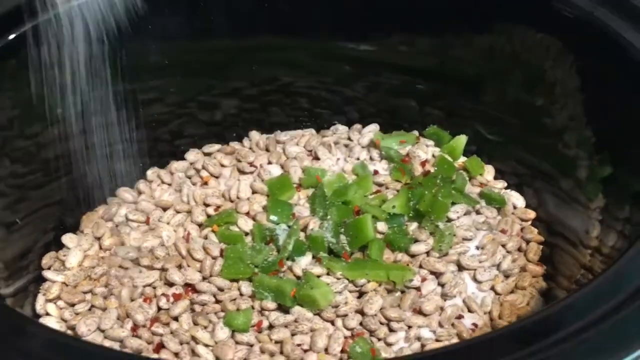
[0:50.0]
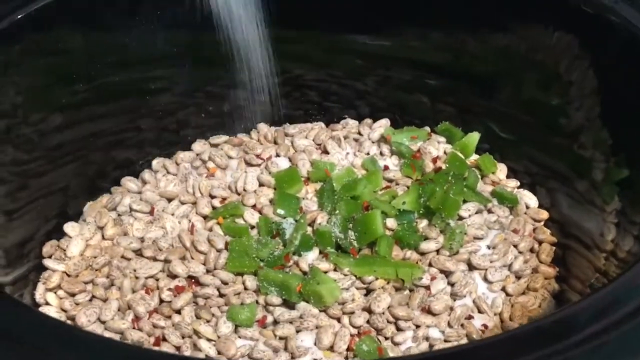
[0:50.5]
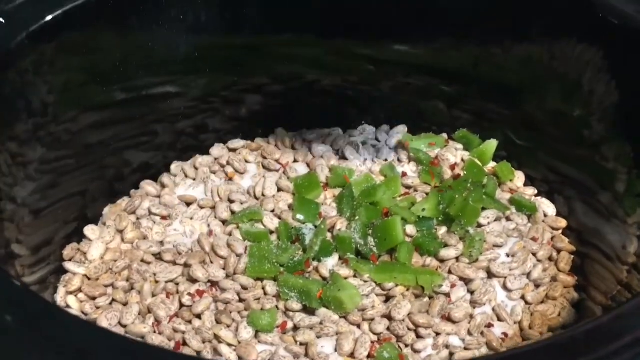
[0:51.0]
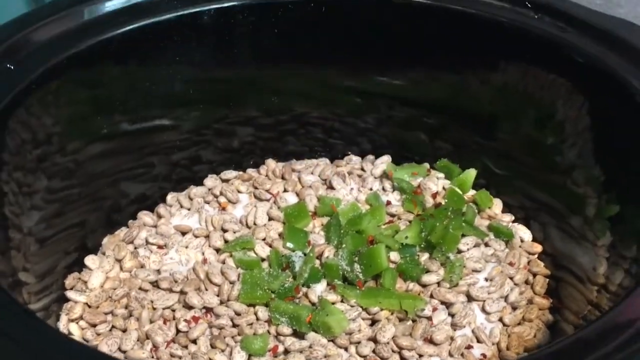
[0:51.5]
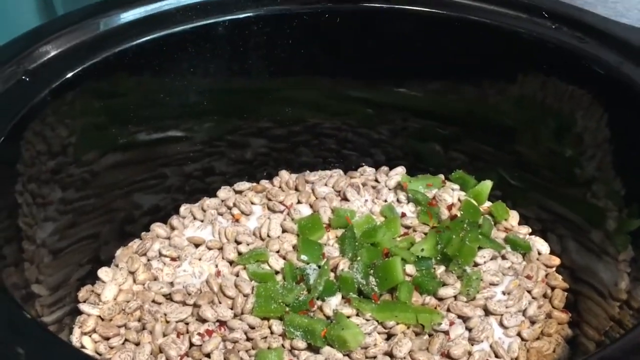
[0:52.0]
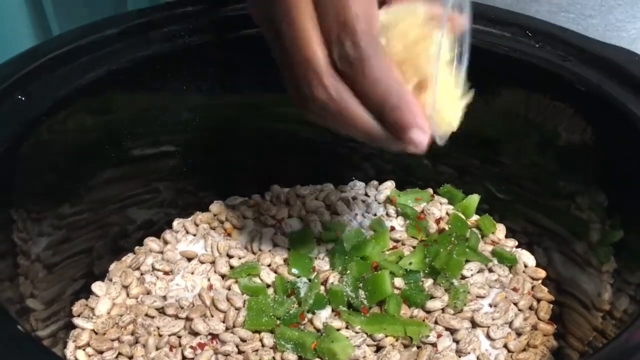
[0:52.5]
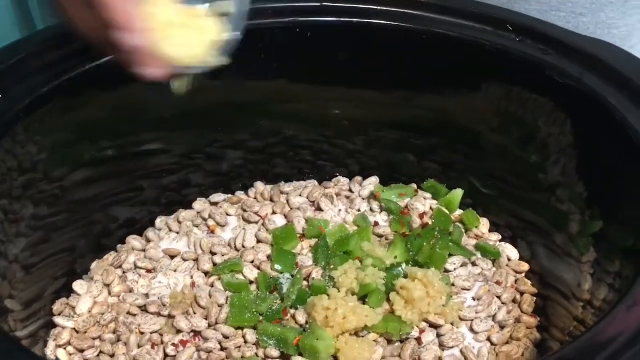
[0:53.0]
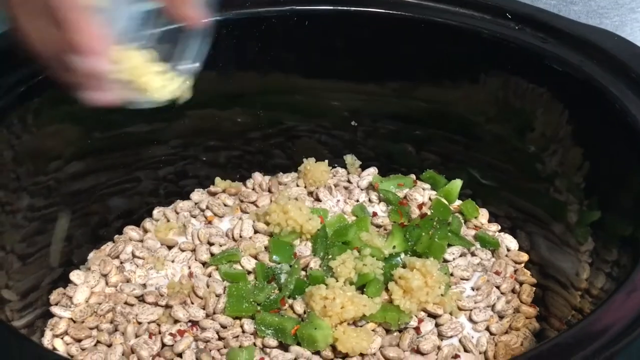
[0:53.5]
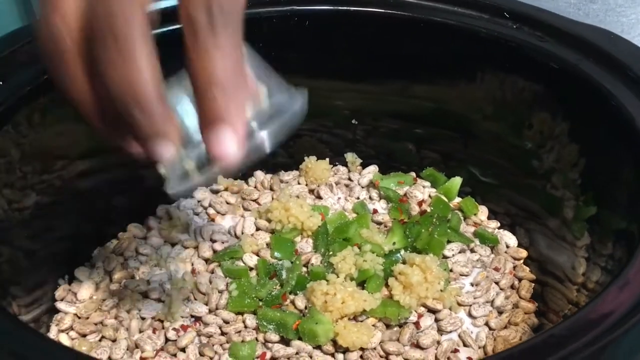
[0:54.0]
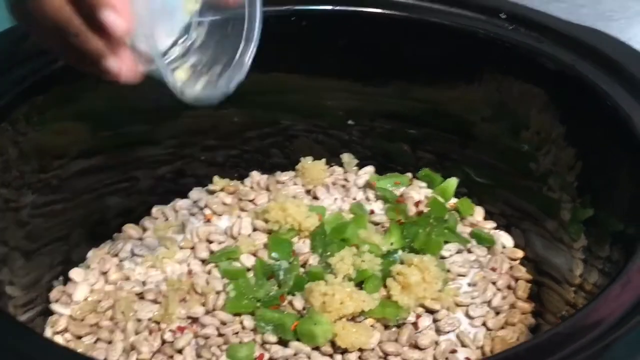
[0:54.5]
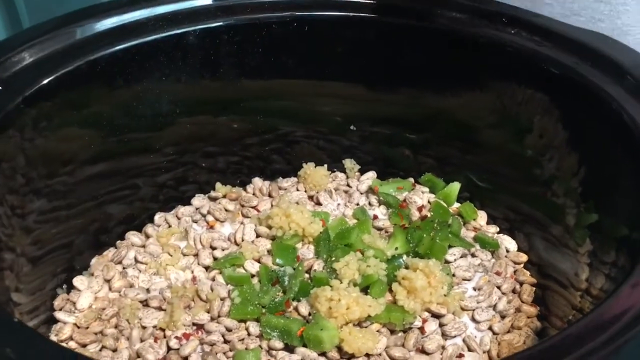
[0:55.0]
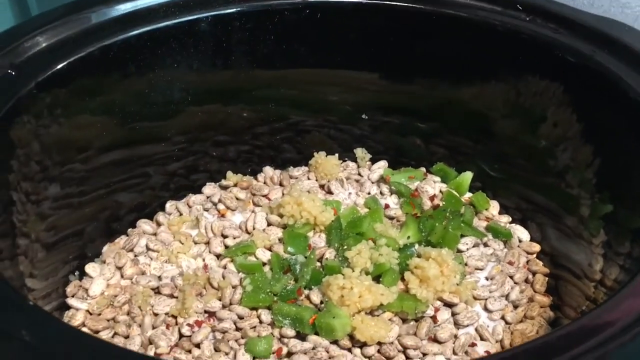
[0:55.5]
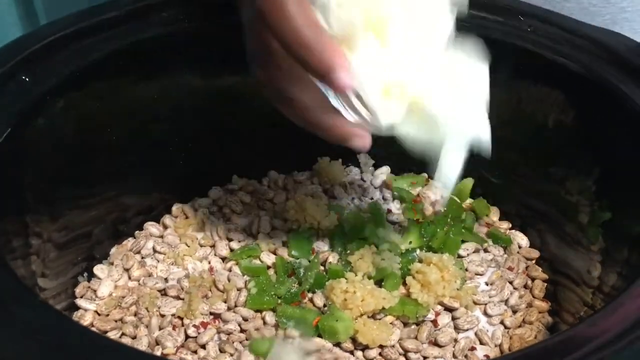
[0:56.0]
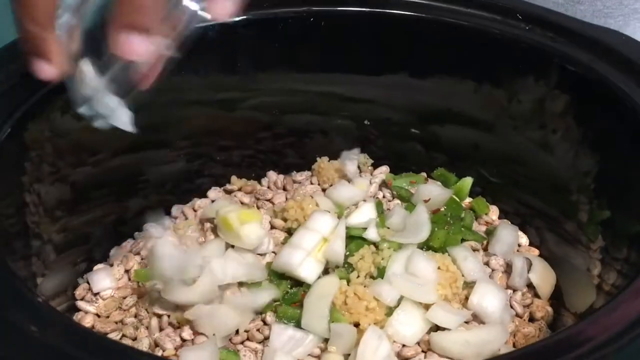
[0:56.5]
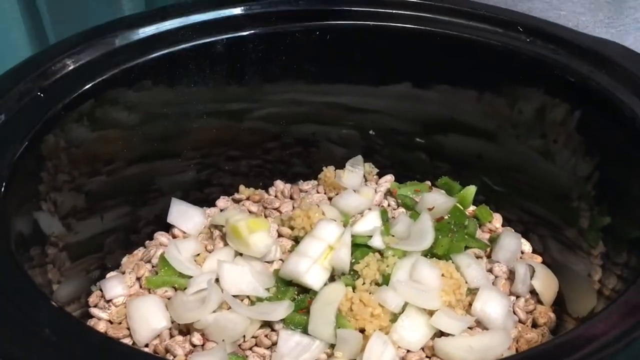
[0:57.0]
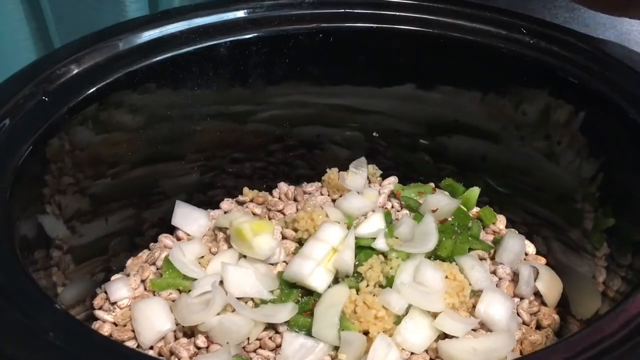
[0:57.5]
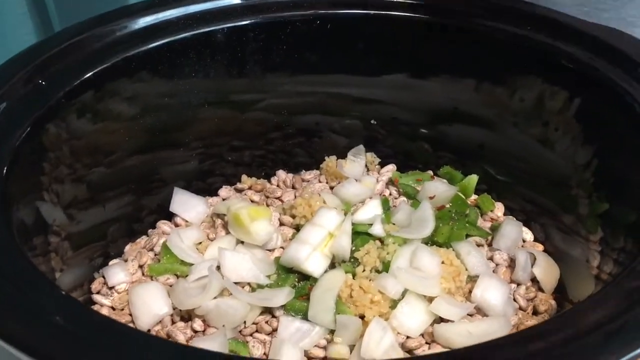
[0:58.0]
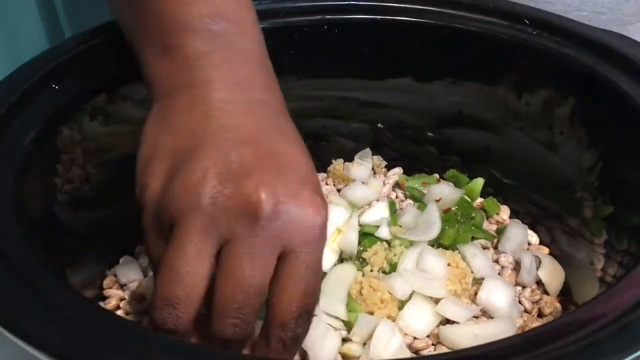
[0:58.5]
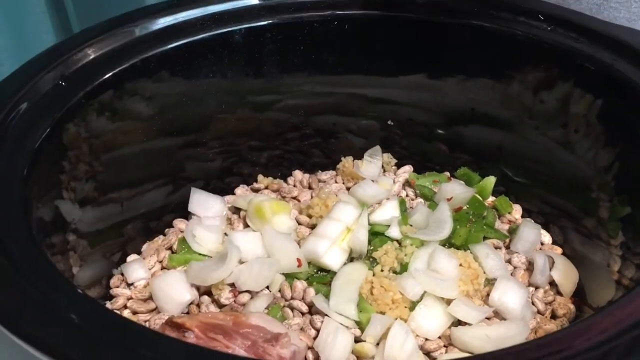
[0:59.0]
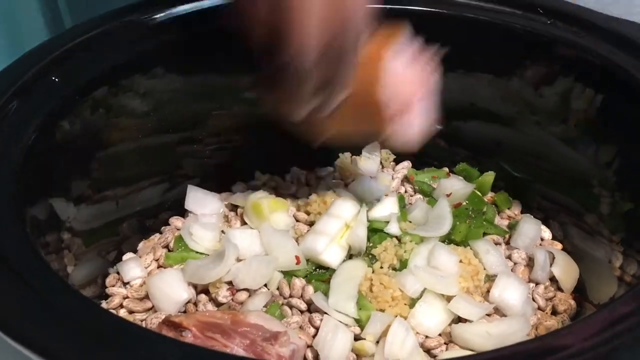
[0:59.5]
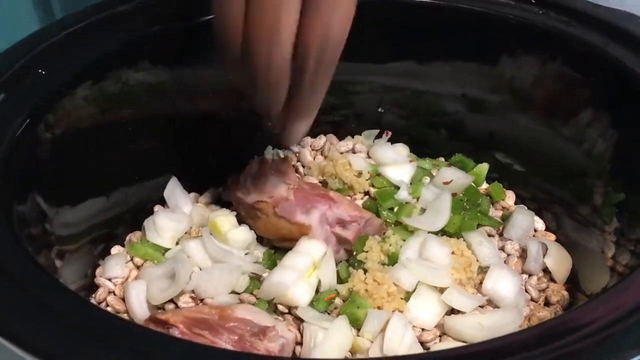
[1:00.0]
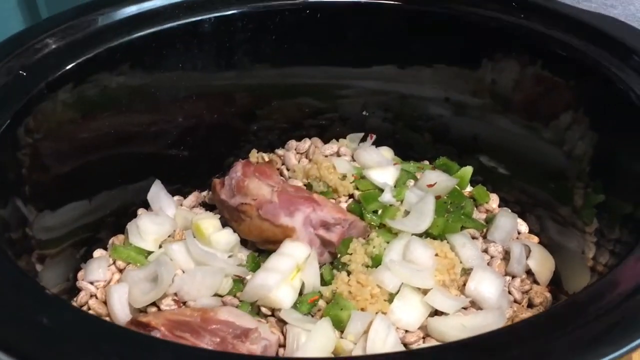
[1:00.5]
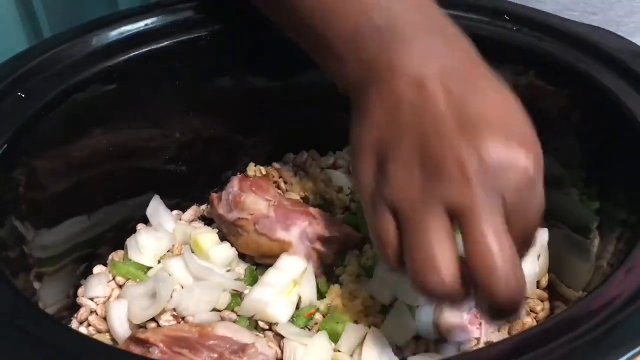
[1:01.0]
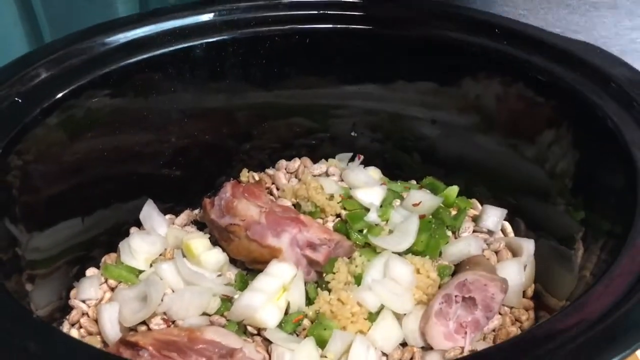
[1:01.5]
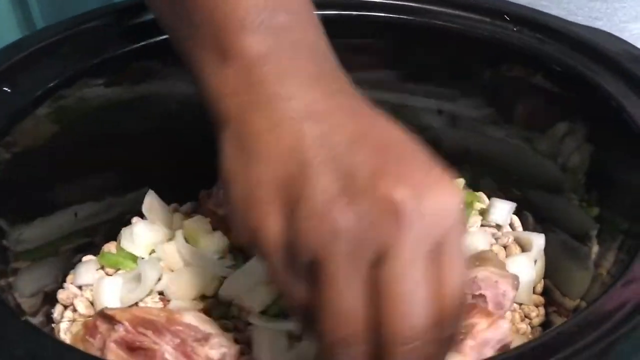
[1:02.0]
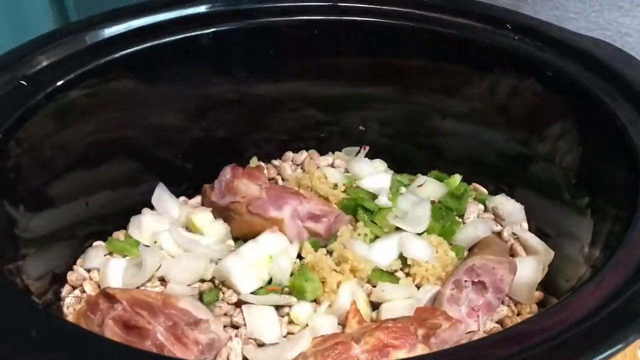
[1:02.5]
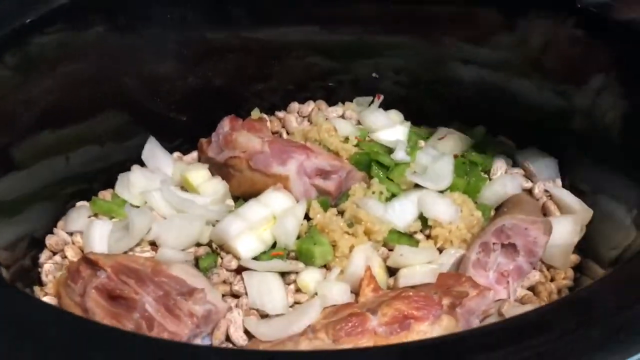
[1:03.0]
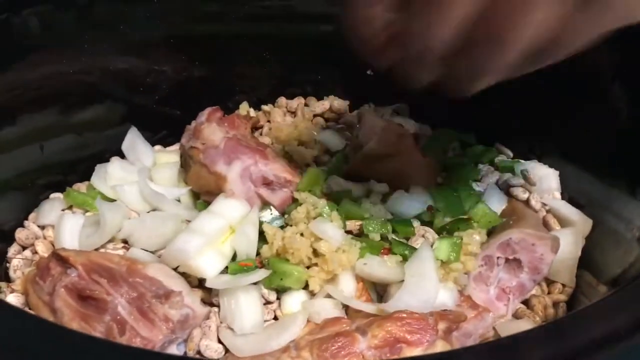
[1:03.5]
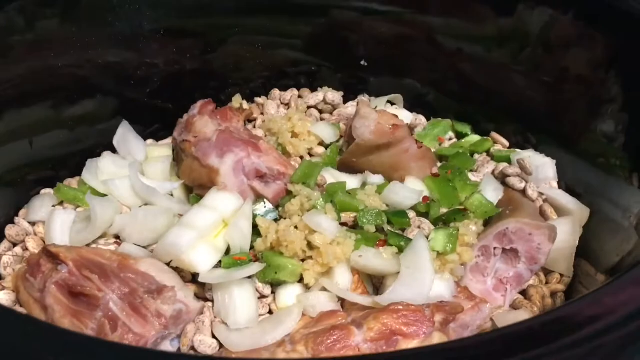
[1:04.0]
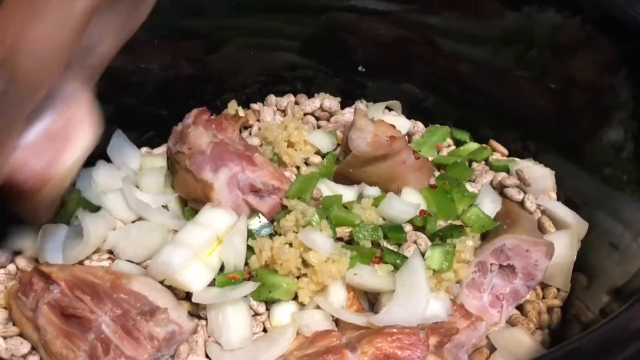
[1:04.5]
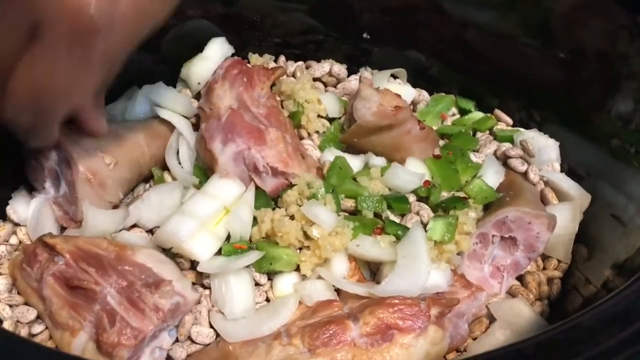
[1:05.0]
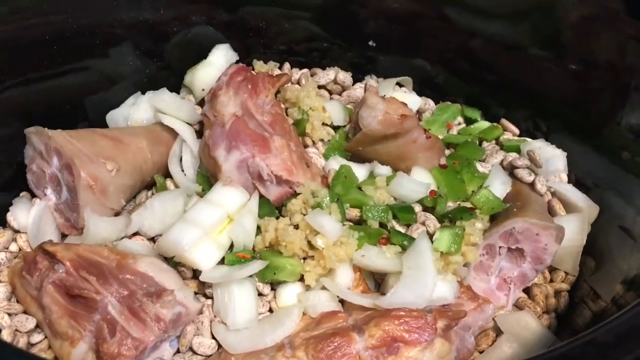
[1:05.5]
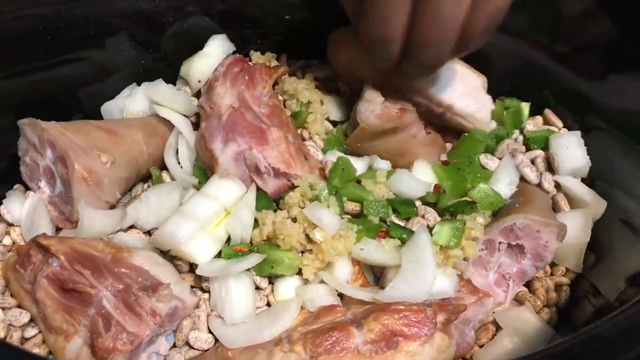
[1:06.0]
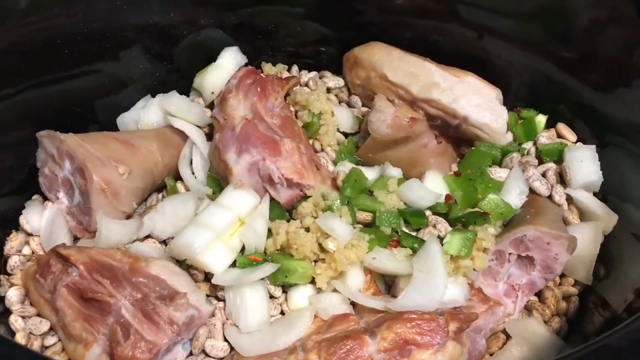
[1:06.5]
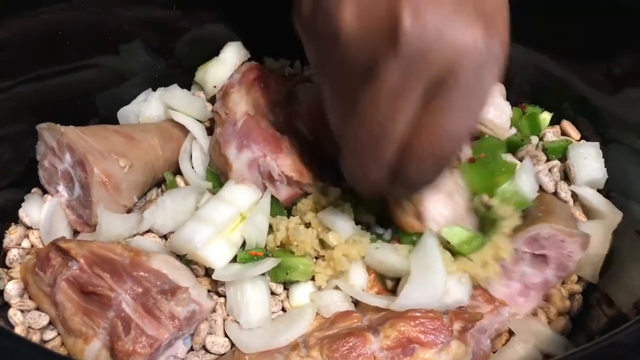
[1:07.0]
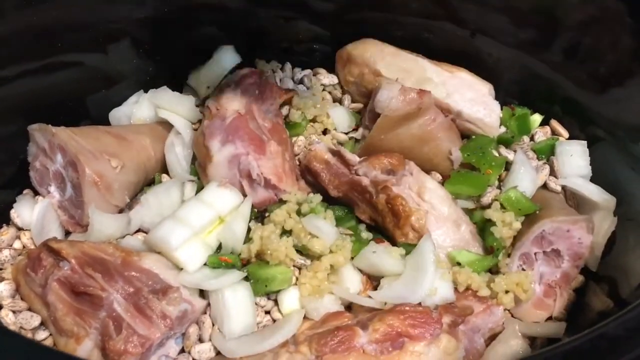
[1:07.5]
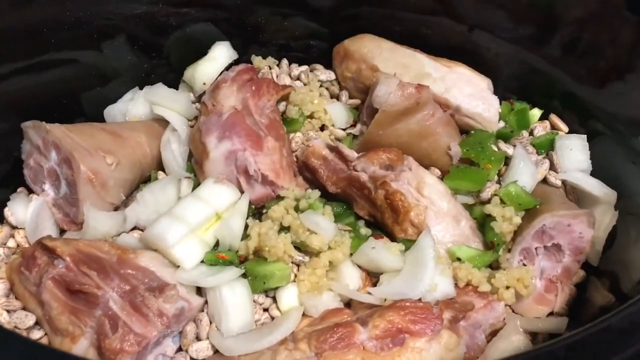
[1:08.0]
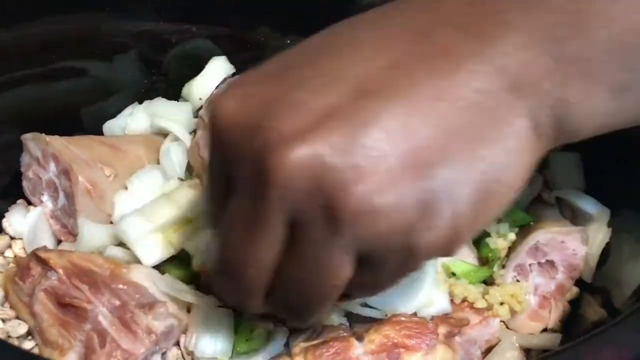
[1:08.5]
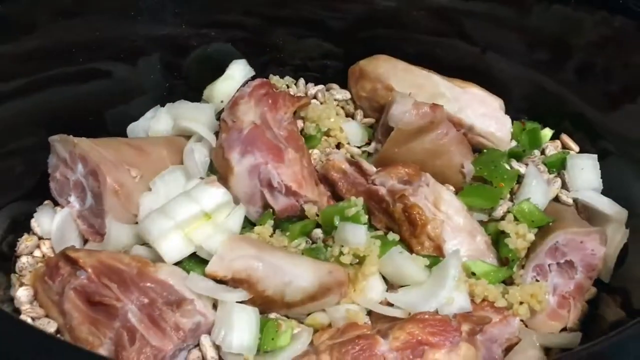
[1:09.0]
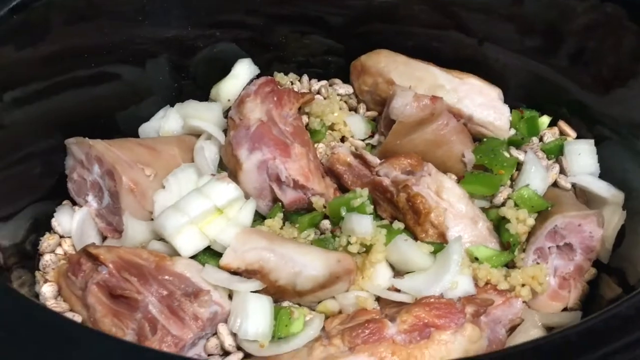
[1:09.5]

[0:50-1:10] The meal is prepared. The meat is placed in a black bowl, and pepper, green pepper, chopped garlic and chopped onion are added. The beans, crayfish, pepper, chopped green pepper and grated garlic go in first, and then the pieces of meat are inserted into the middle one after the other, arranged rather than poured, so that they are immersed in the beans.